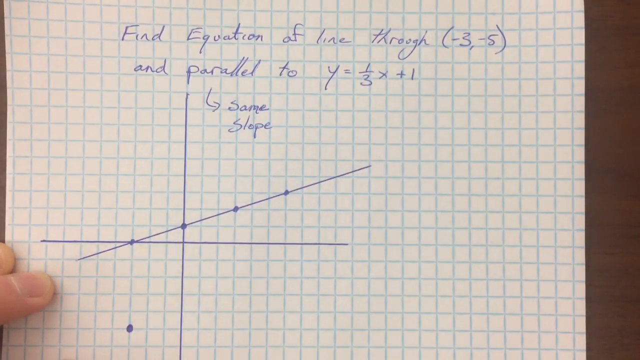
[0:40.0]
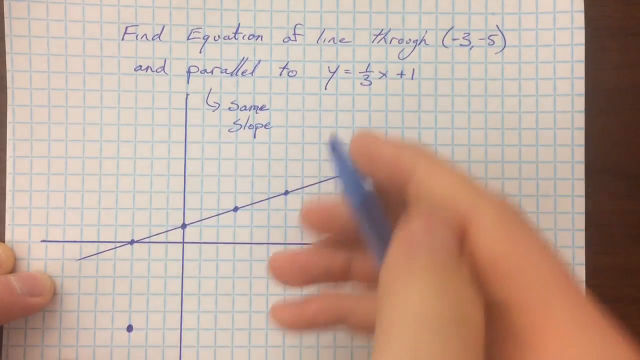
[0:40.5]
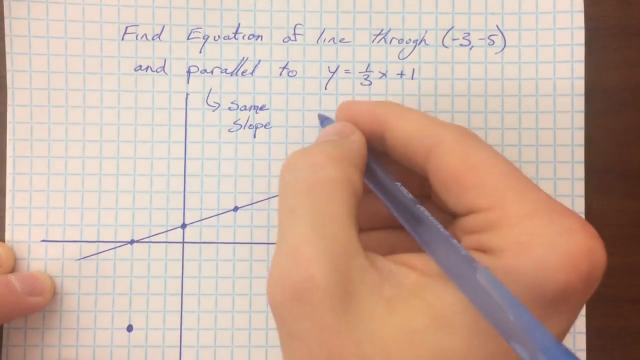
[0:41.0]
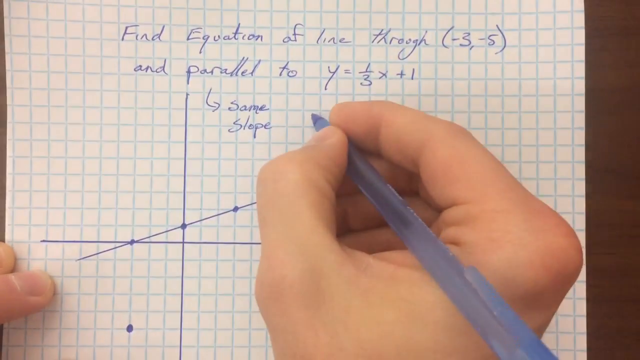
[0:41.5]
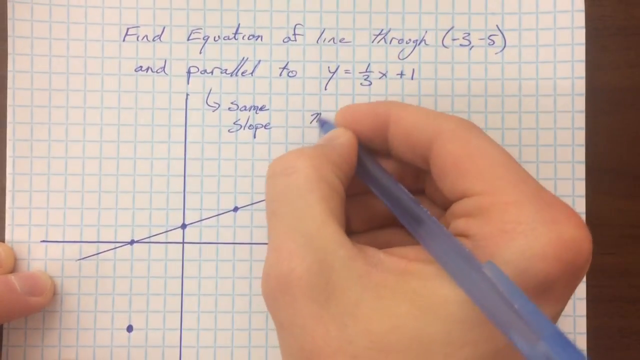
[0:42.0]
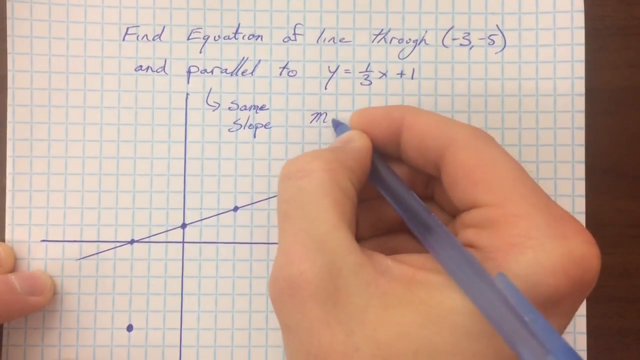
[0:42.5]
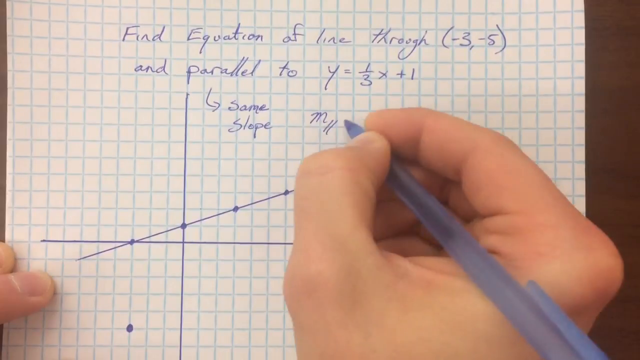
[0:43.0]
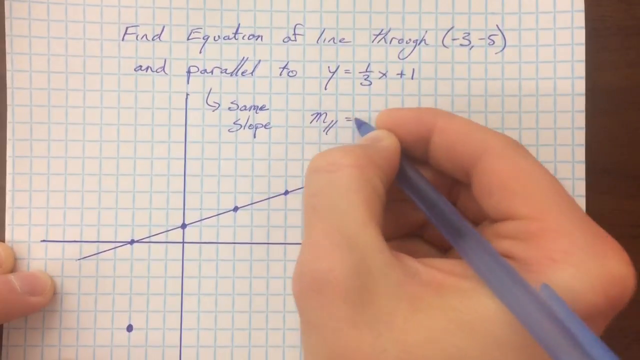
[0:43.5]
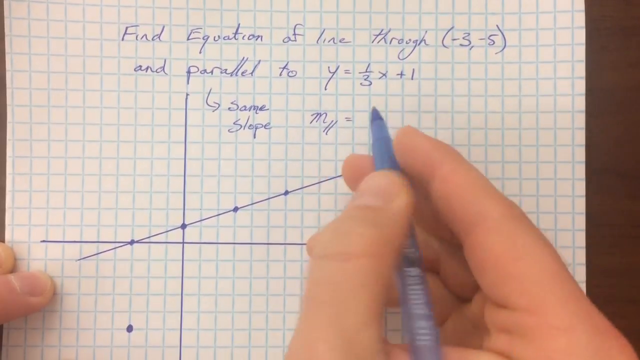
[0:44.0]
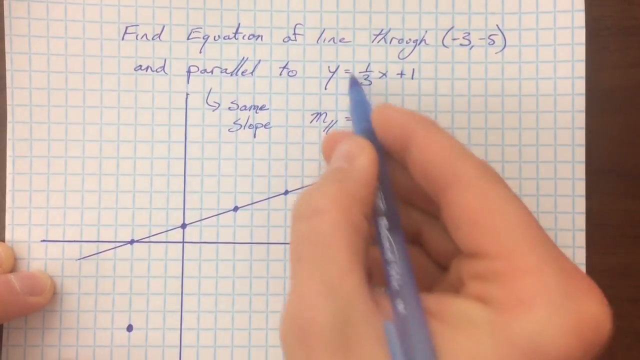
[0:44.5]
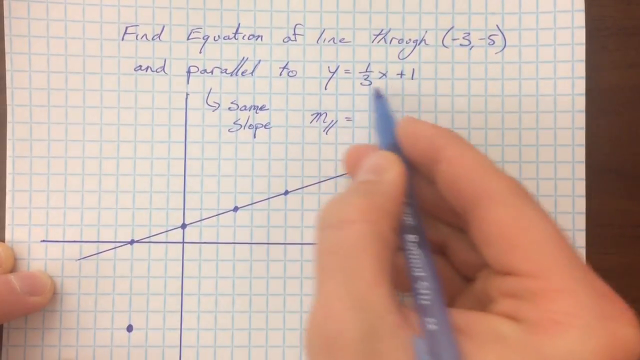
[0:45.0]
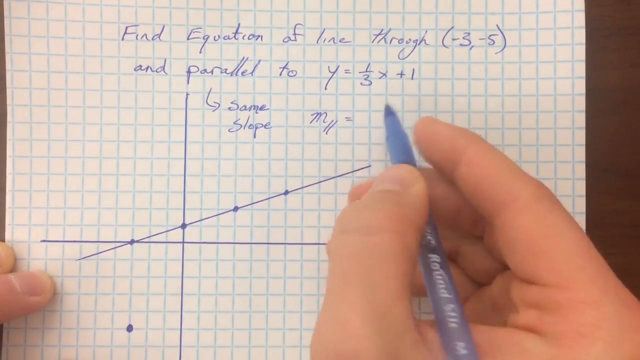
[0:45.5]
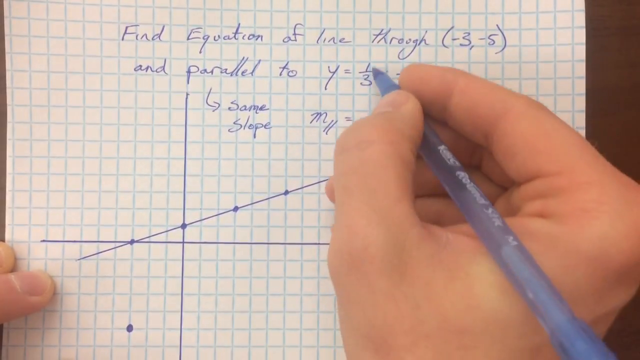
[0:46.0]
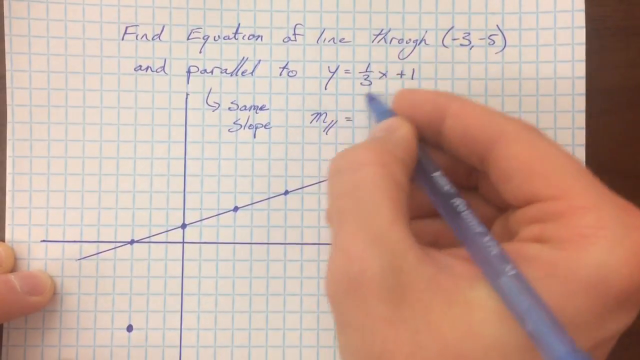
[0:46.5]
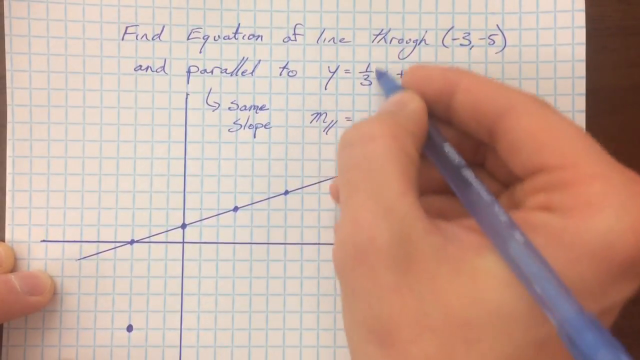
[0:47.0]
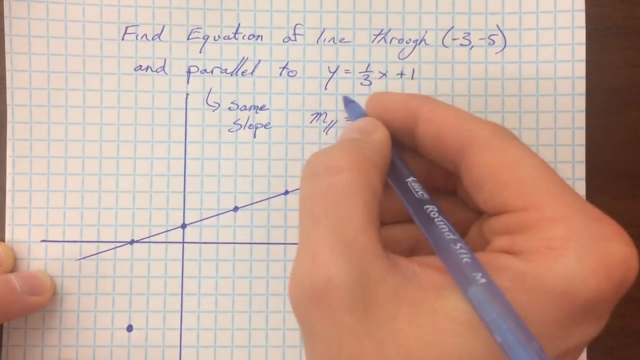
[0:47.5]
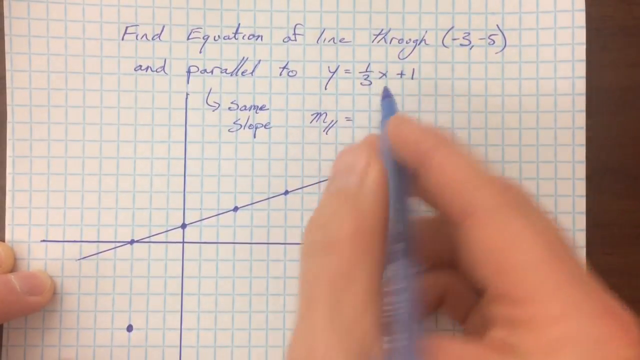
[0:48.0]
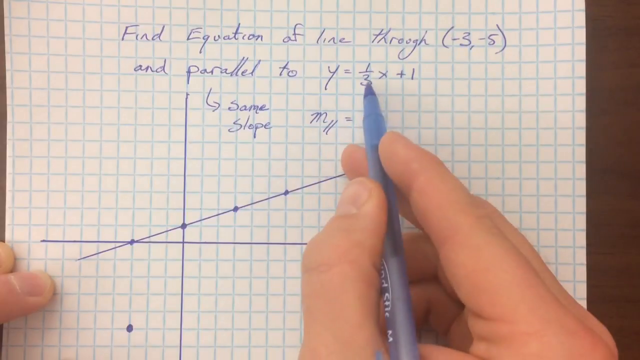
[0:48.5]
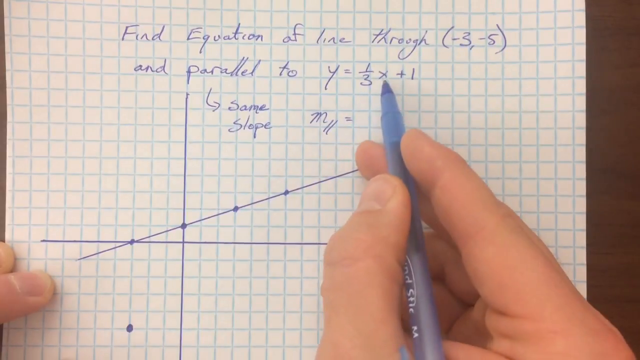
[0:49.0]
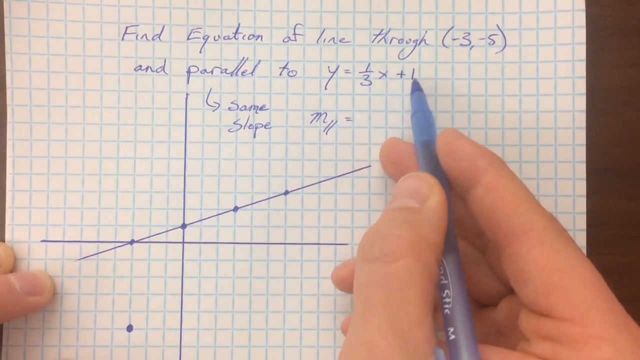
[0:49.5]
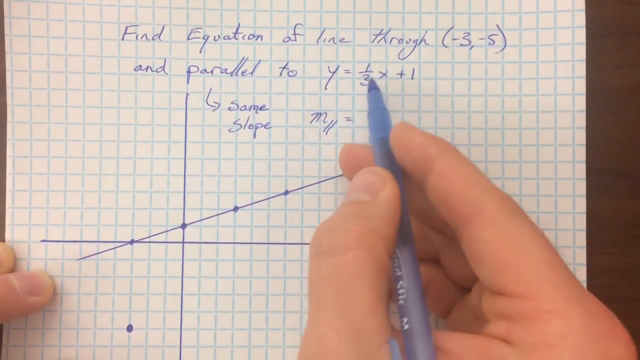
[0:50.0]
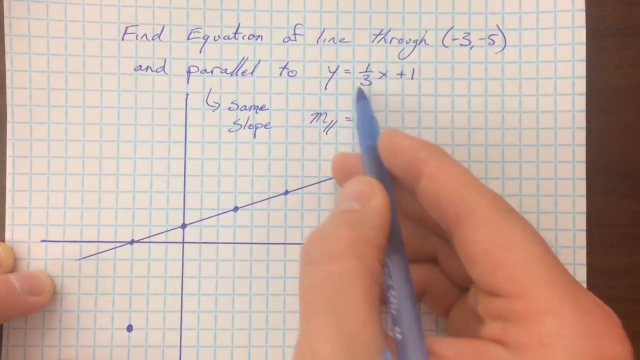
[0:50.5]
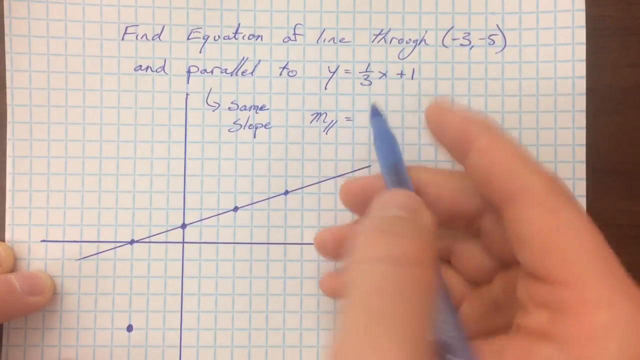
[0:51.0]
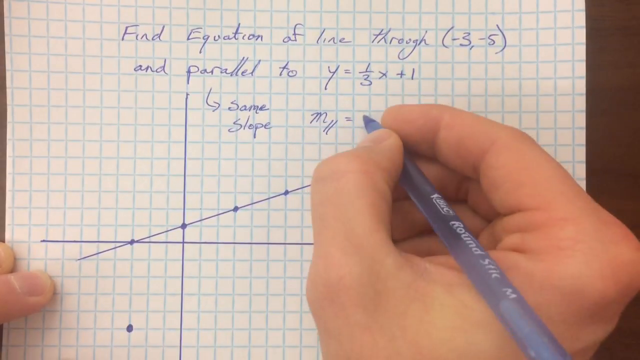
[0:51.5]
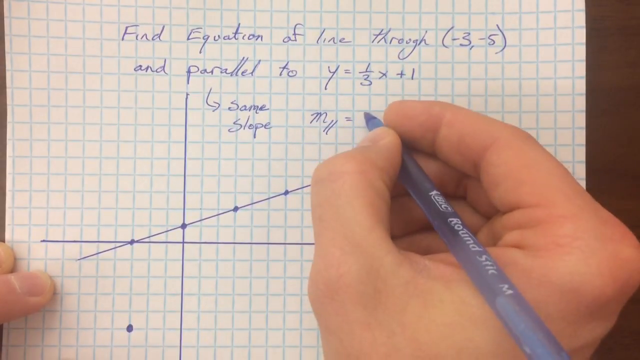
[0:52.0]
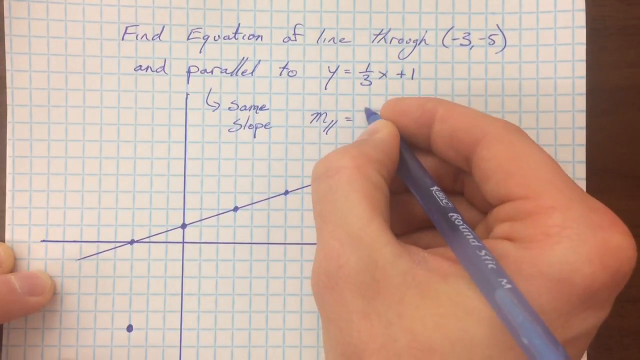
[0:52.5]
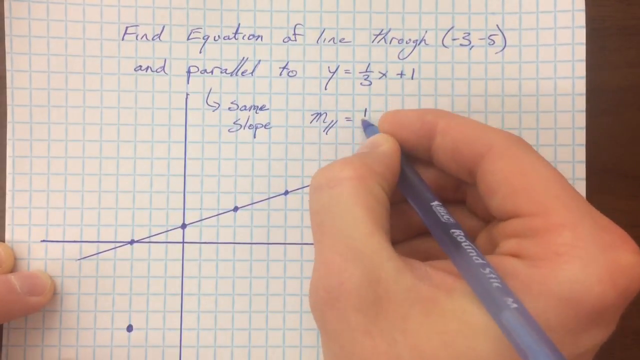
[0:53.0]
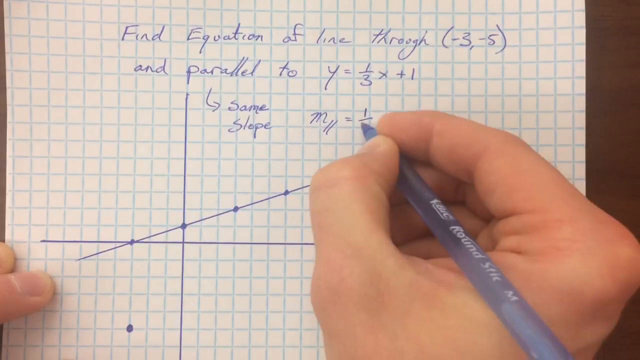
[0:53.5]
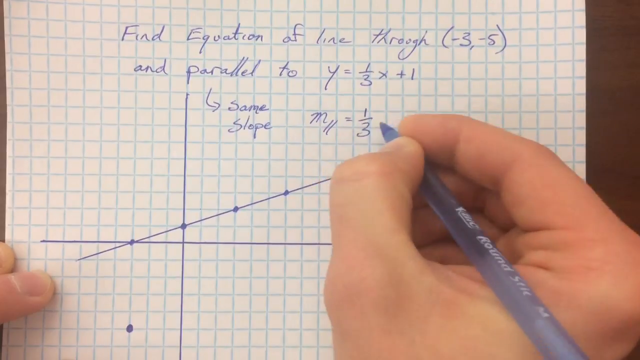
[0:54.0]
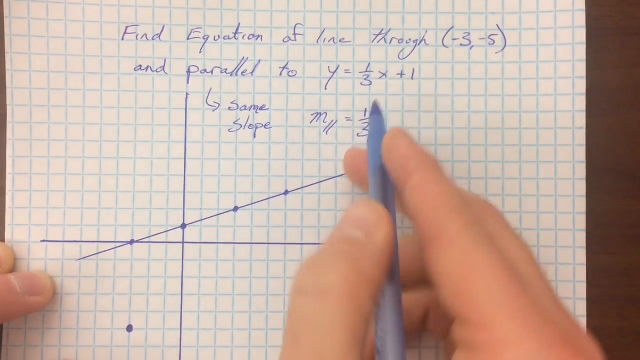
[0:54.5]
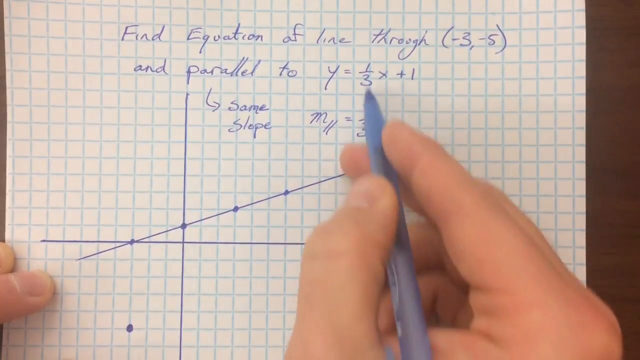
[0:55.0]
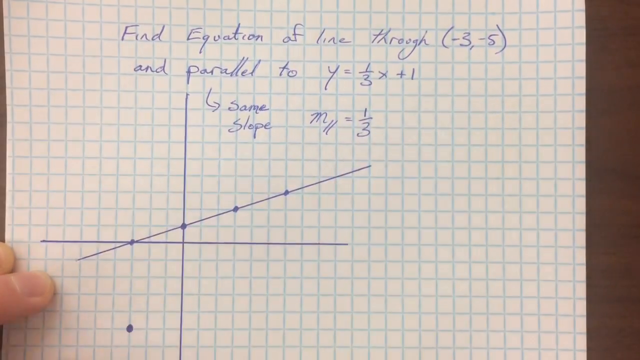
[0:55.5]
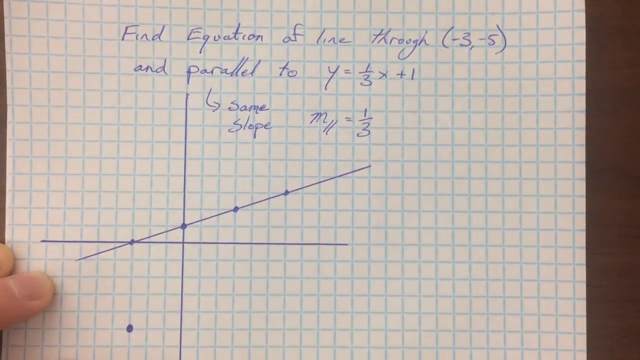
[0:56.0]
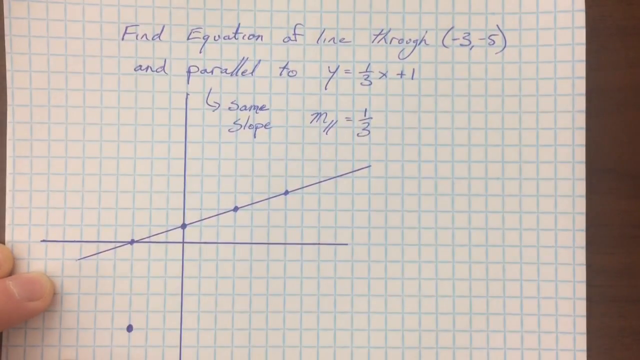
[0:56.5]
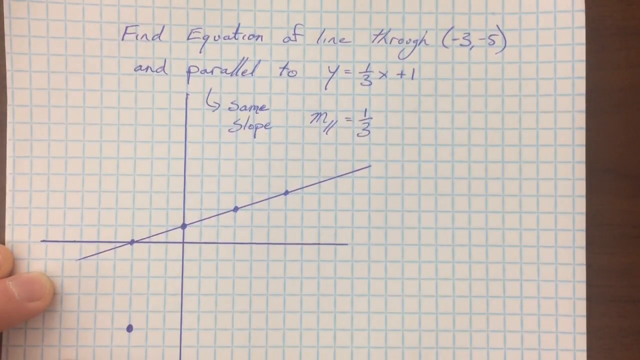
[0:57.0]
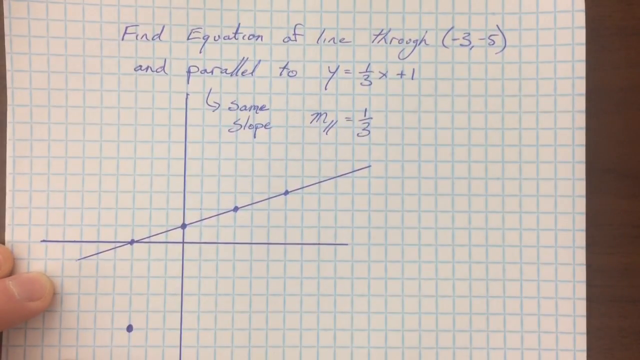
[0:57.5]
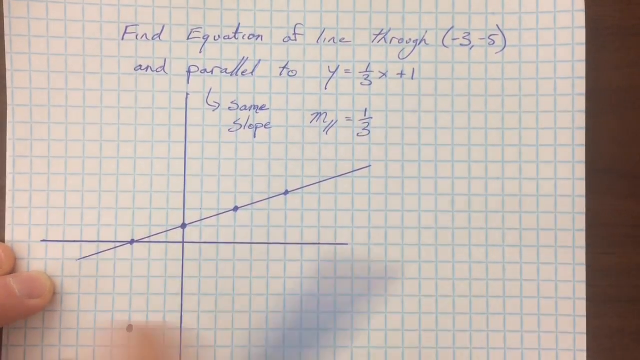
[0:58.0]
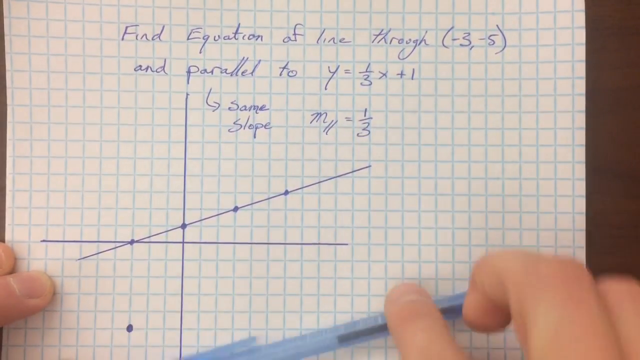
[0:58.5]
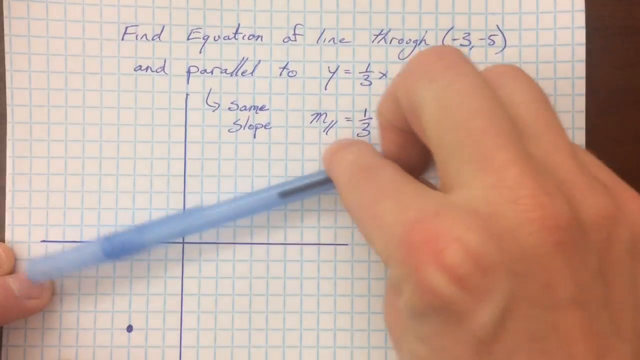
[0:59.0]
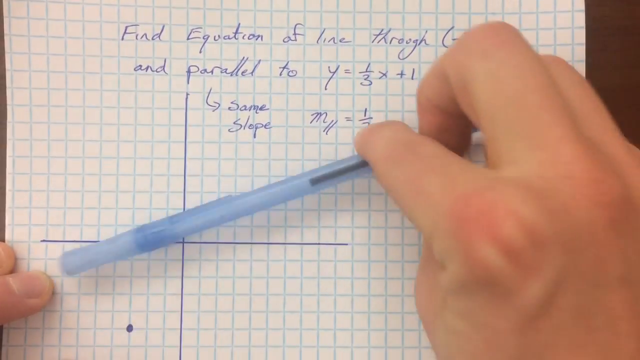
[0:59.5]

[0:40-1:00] The person writes next to "same slope", adding an M with two lines beside it. He then circles the 1/3x + 1 part of the earlier equation and points specifically at the 1/3. He then gestures on the graph, apparently indicating that the other line would be drawn the same way as the existing one, just in a different place and passing through different points.